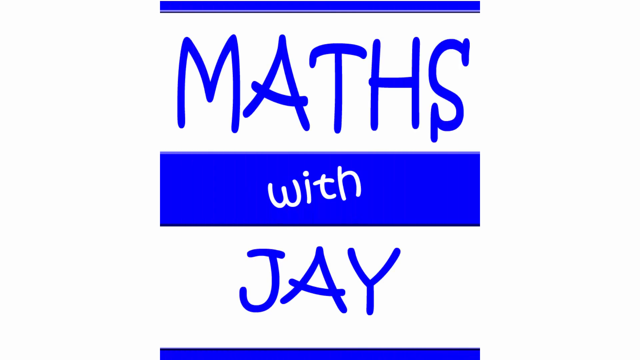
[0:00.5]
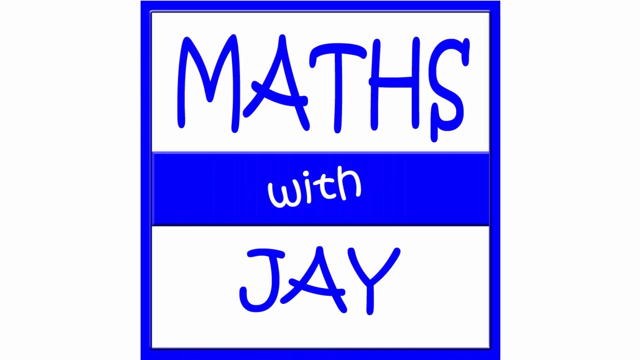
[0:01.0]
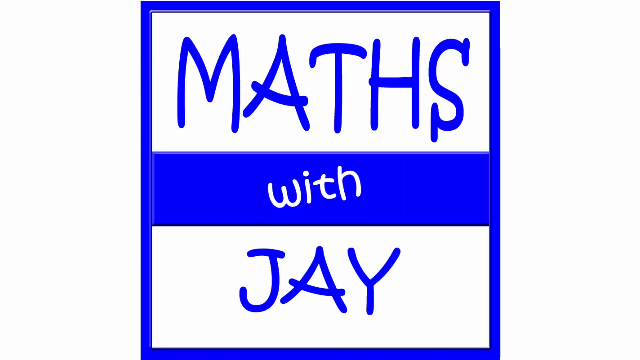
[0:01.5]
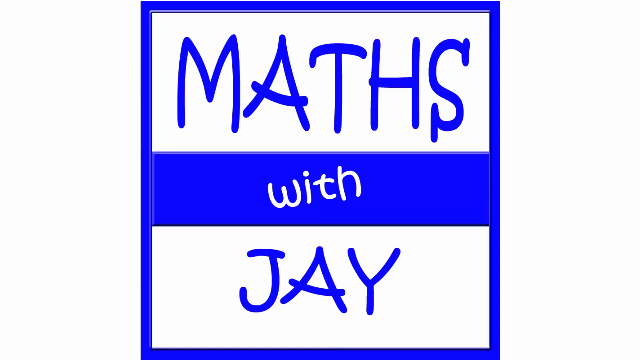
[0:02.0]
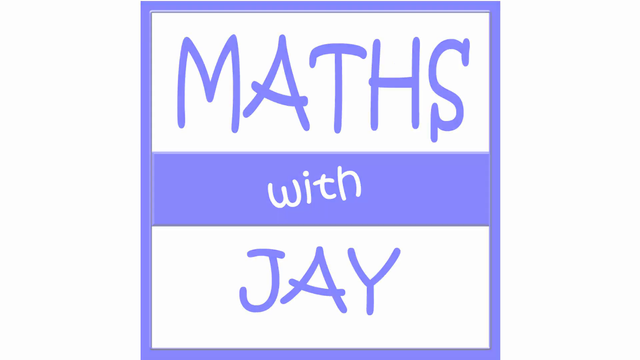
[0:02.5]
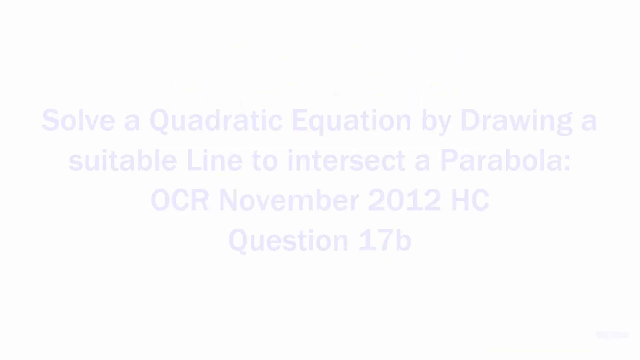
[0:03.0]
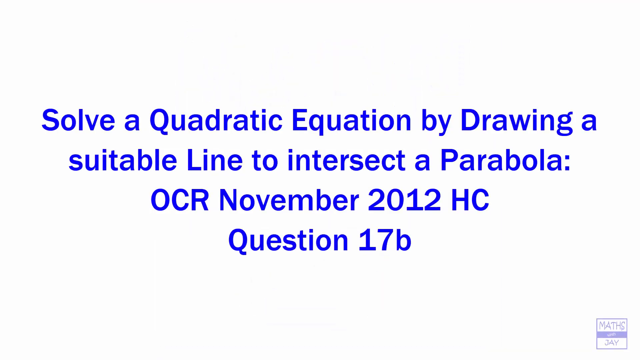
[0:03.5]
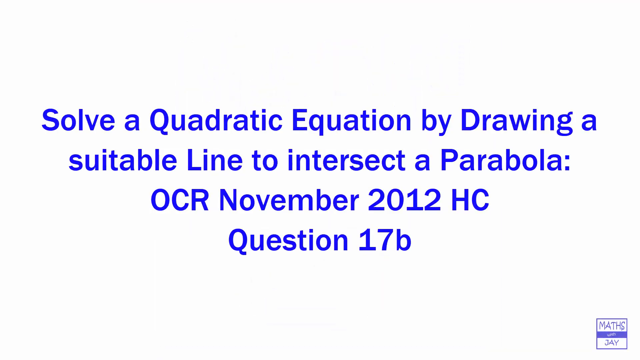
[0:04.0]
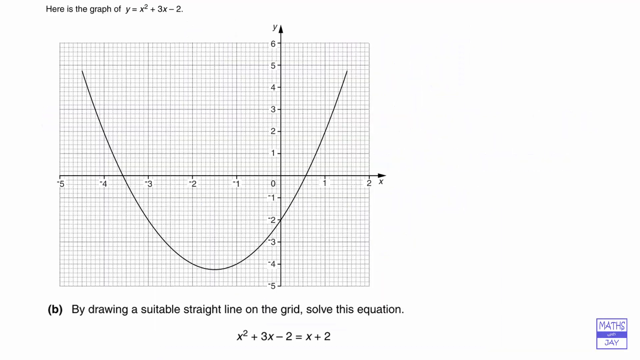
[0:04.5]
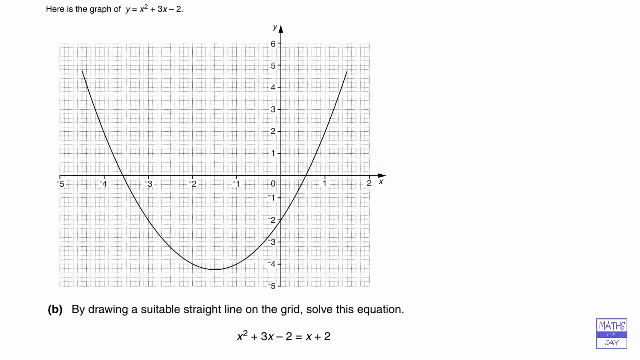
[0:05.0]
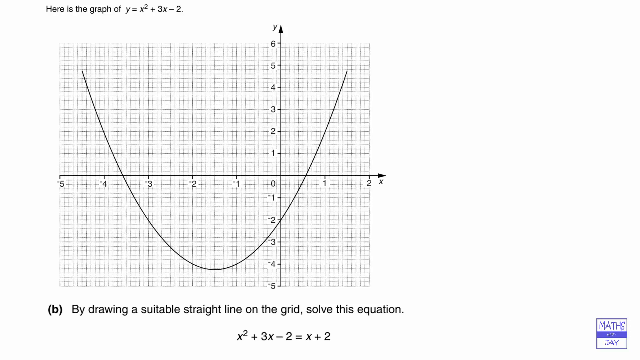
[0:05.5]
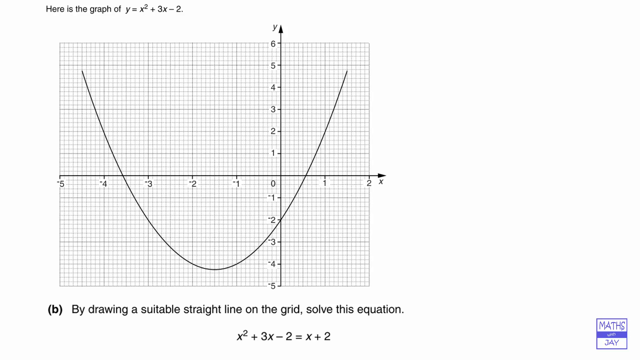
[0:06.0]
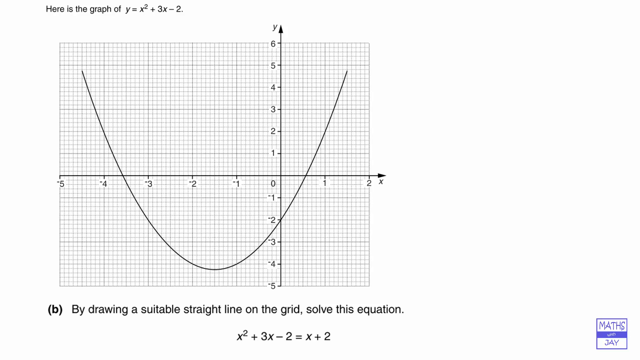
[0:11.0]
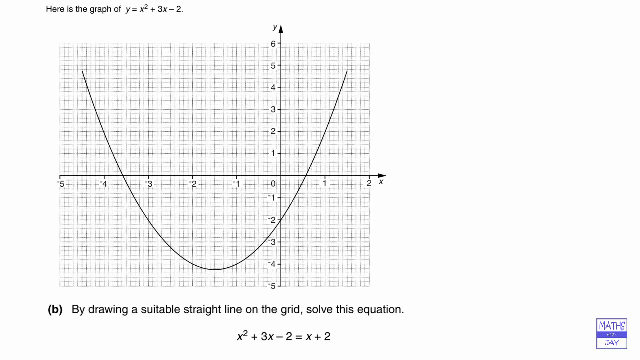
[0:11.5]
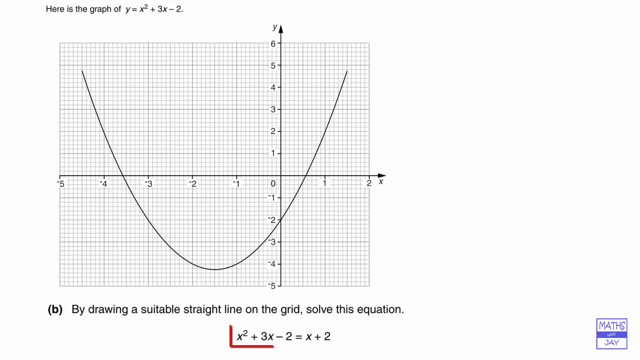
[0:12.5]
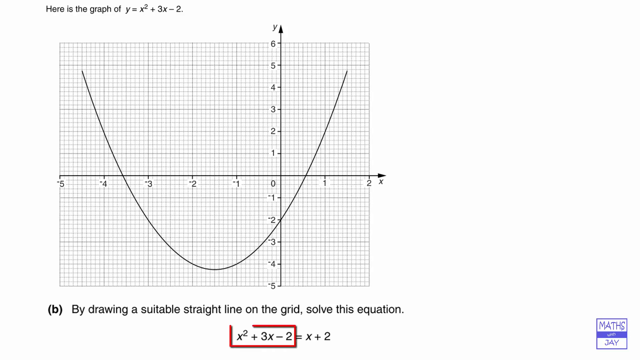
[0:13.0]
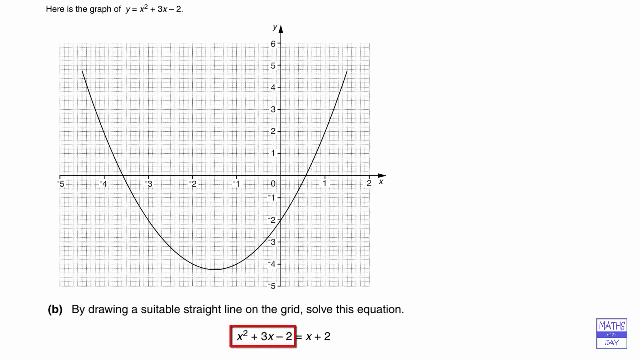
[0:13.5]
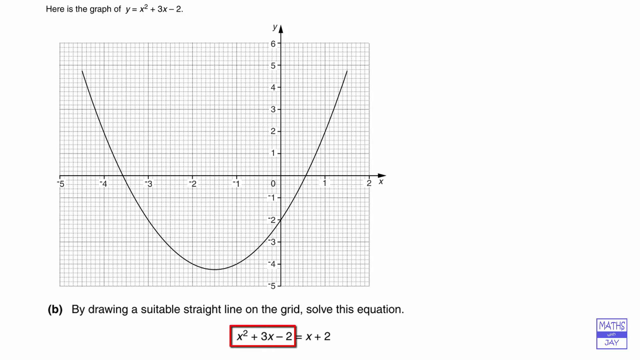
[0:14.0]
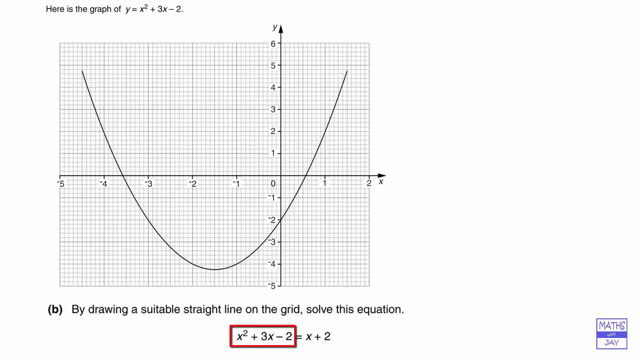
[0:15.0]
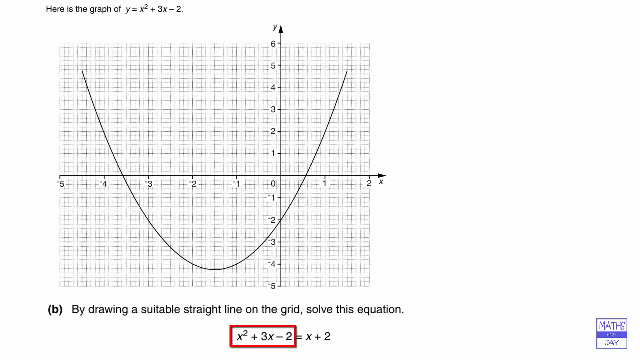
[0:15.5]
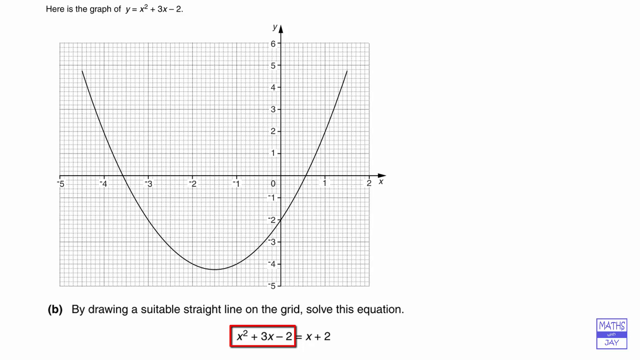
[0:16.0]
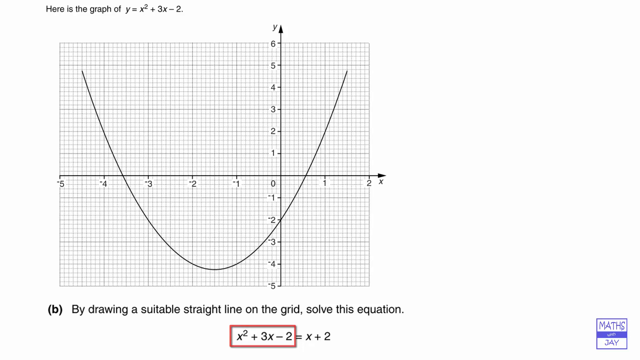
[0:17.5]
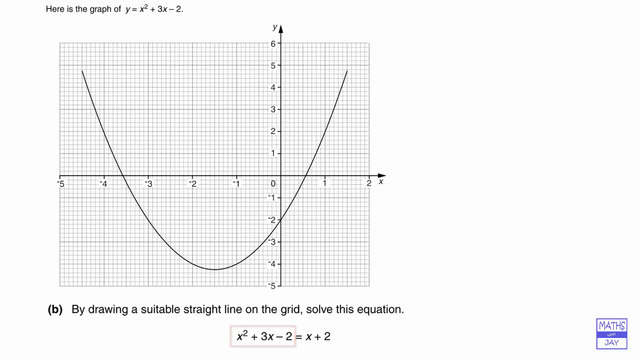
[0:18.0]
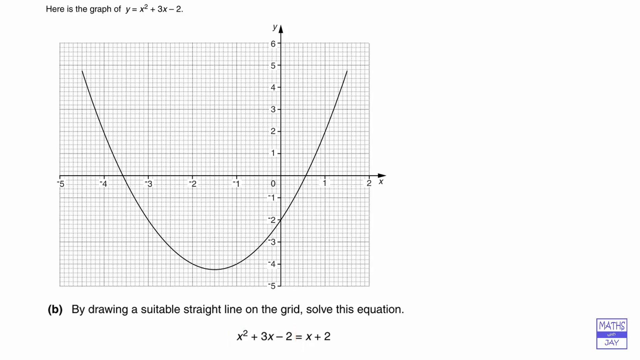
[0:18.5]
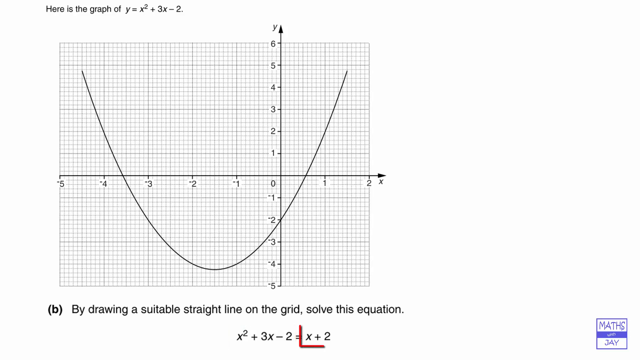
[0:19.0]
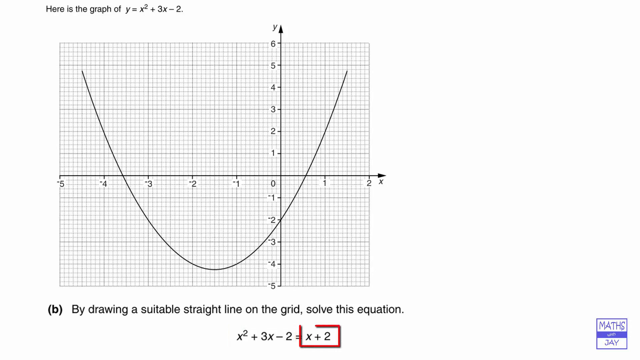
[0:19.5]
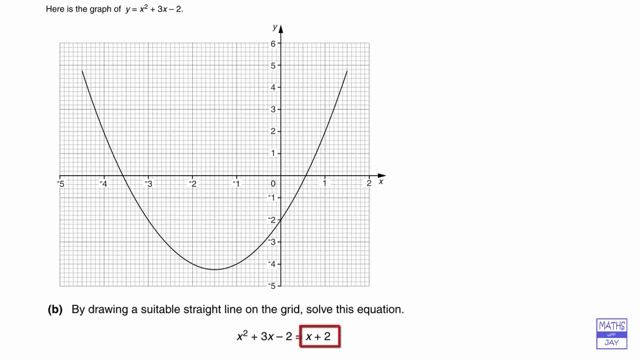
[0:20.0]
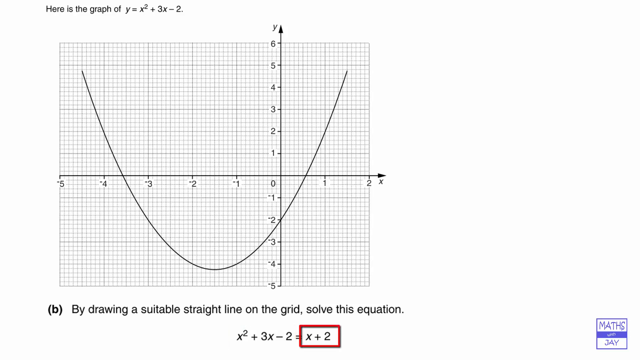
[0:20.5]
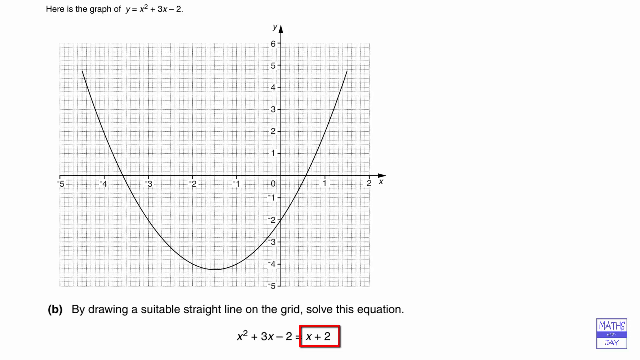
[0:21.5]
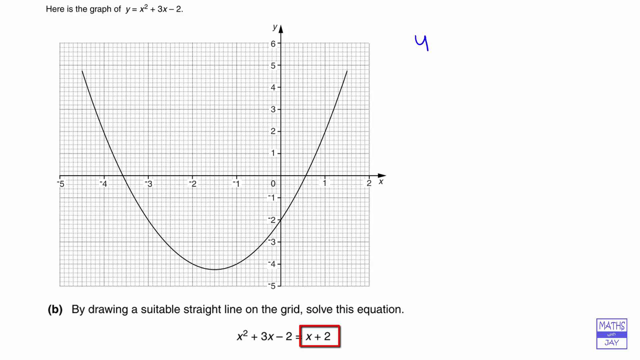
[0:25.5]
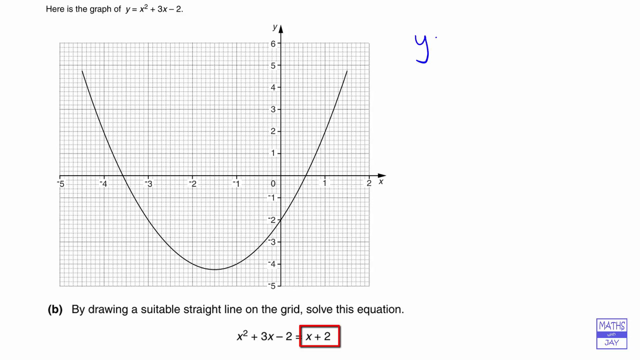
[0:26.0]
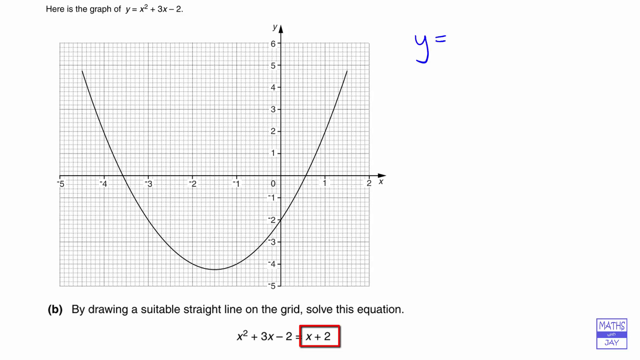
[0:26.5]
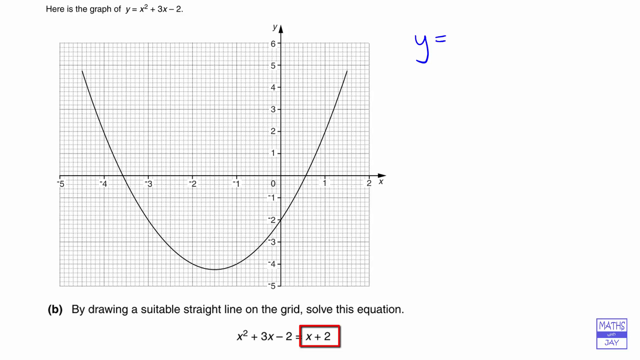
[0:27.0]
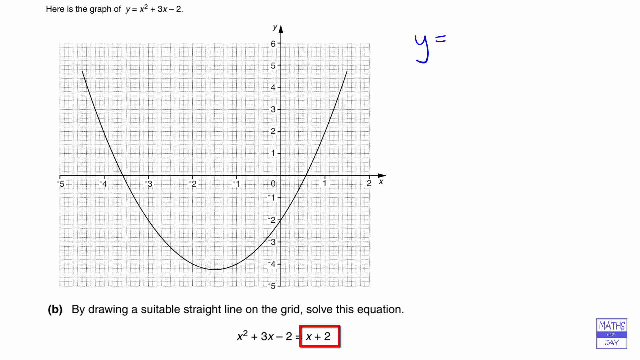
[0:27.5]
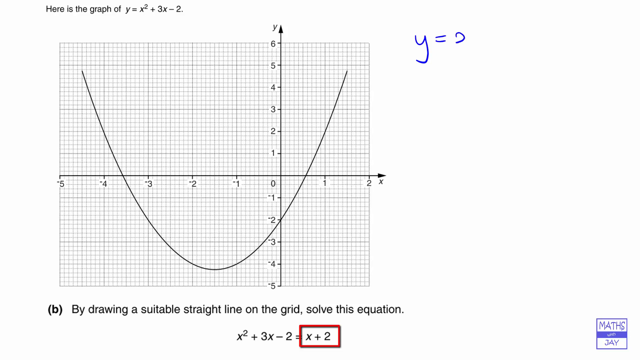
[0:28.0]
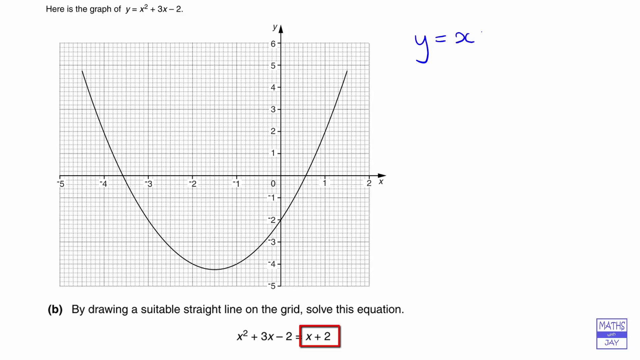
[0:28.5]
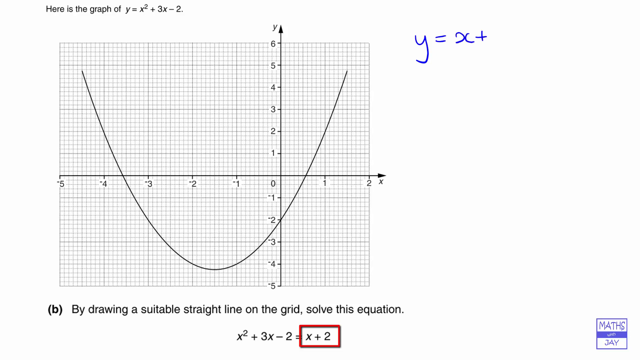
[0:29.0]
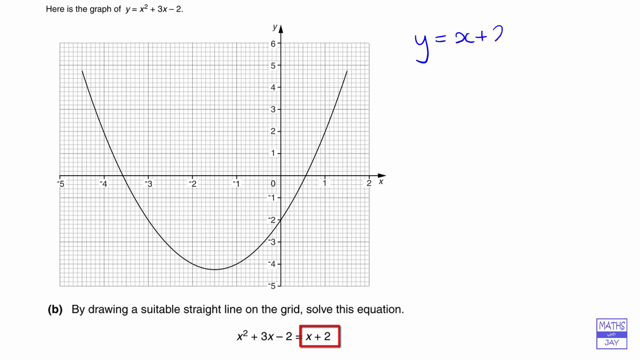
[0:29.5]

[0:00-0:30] The video concerns solving a quadratic equation by drawing a sustainable line, from OCR November 2012 HC question 17B. A graph drawing is shown, the graph of y = x² + 3x − 2. At the bottom is an instruction to solve the equation by drawing a straight line on the grid.